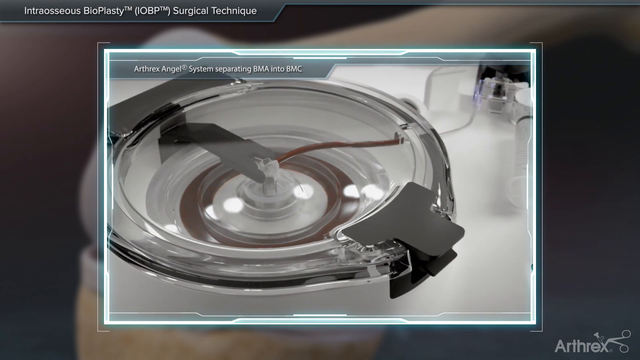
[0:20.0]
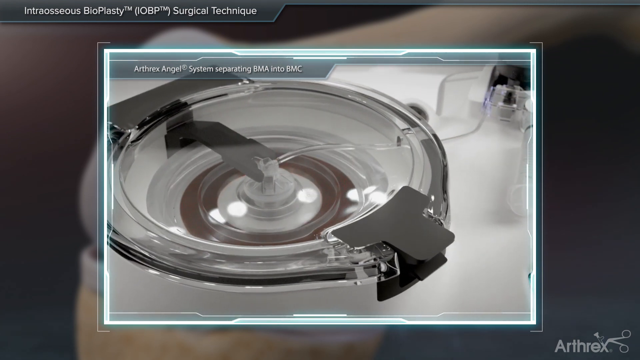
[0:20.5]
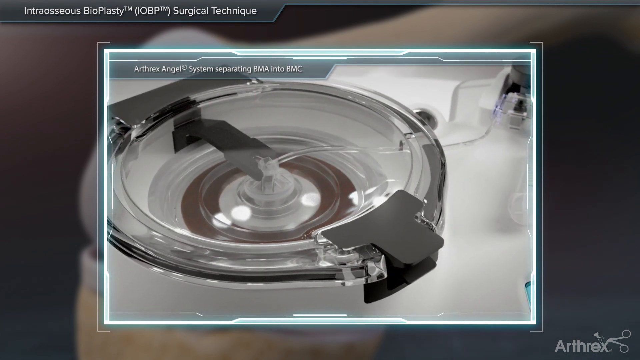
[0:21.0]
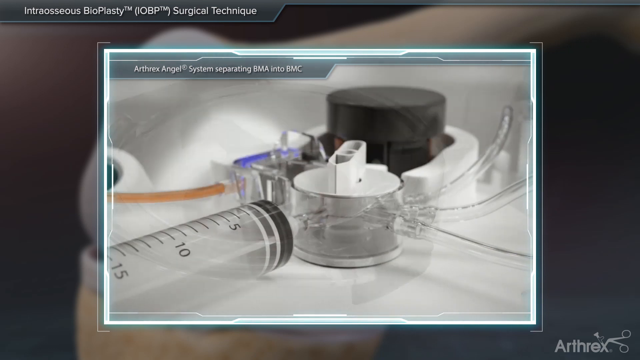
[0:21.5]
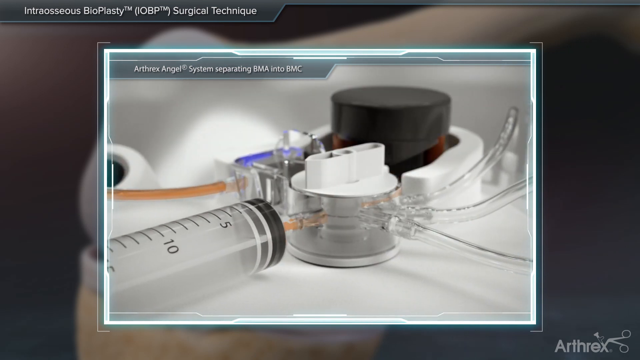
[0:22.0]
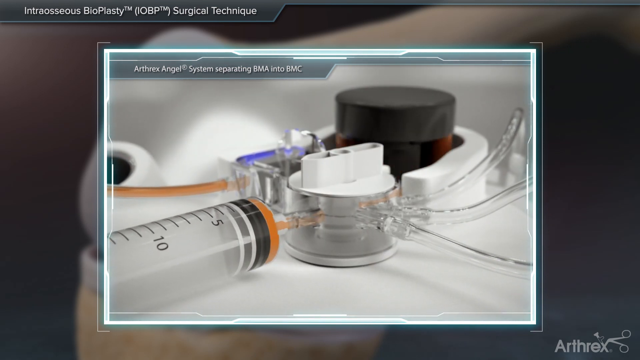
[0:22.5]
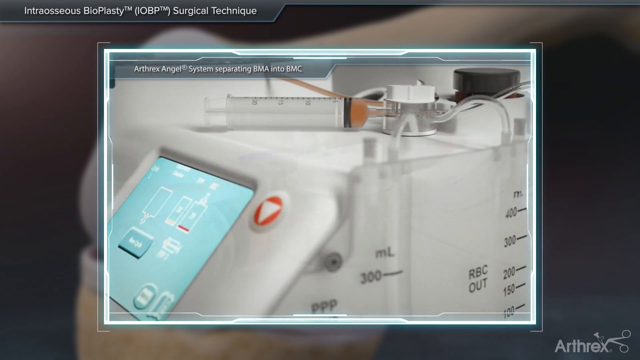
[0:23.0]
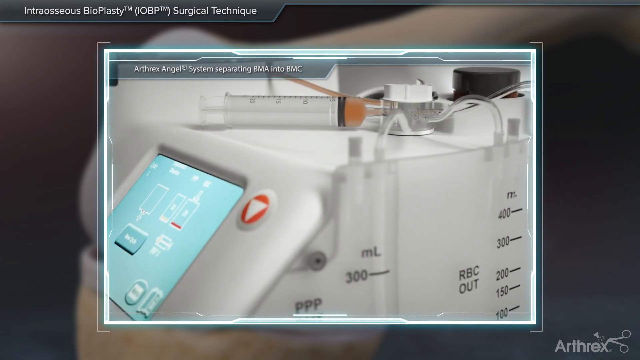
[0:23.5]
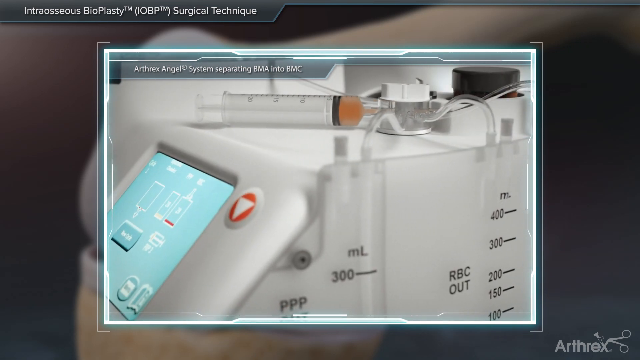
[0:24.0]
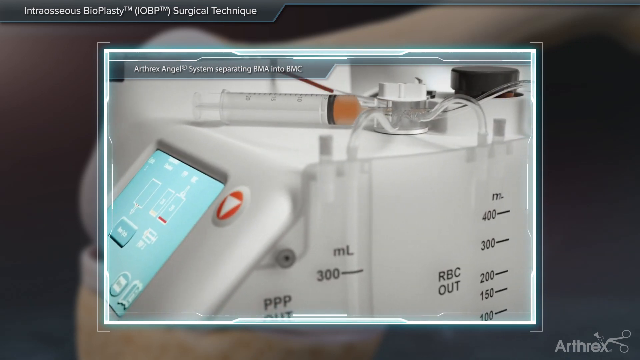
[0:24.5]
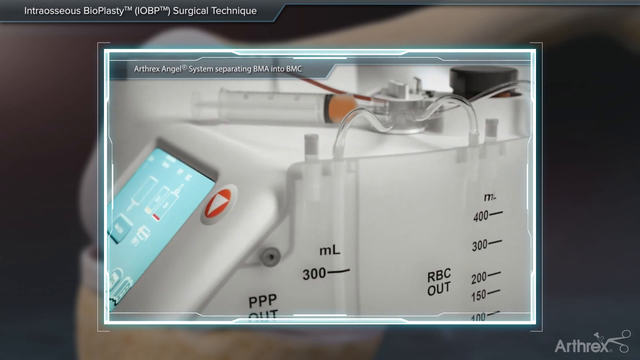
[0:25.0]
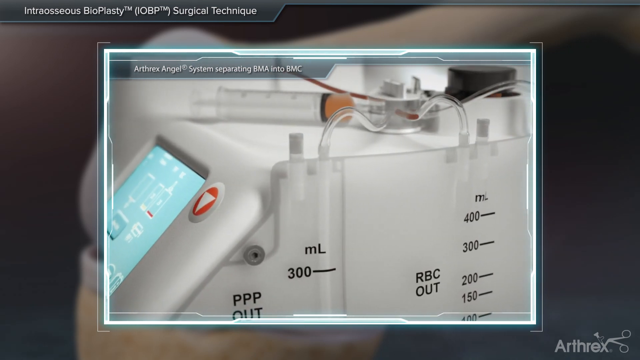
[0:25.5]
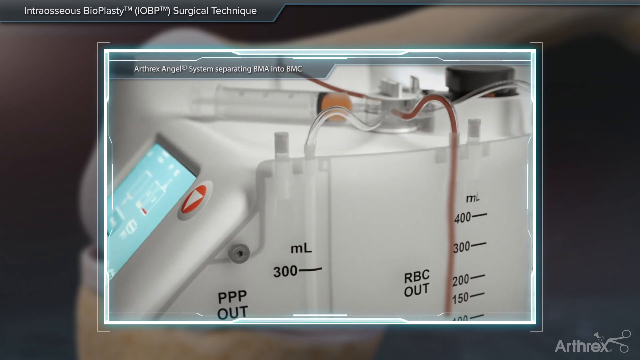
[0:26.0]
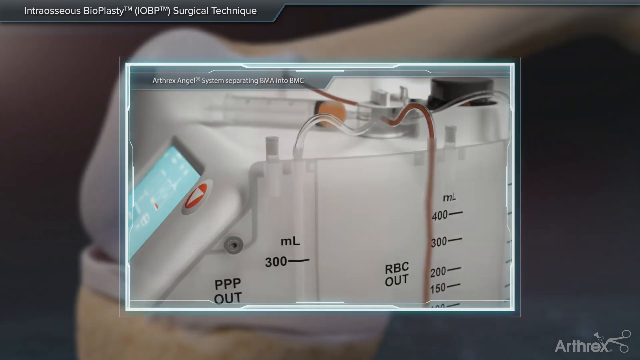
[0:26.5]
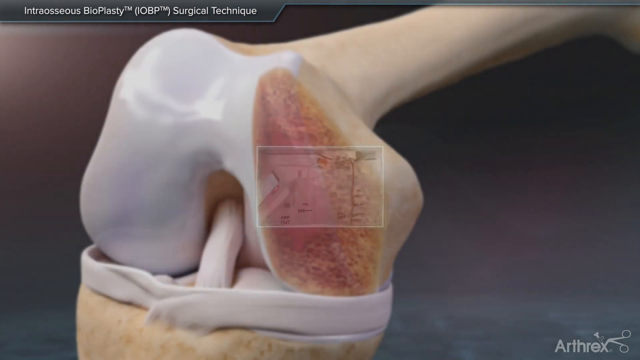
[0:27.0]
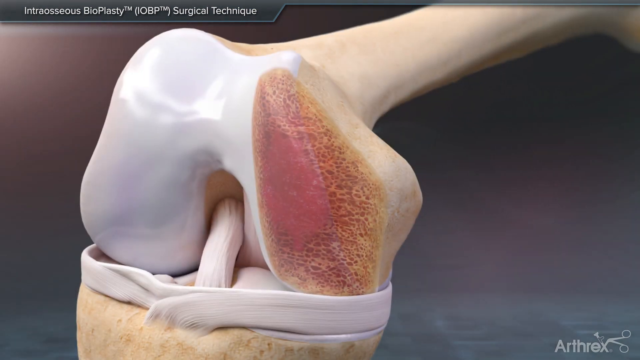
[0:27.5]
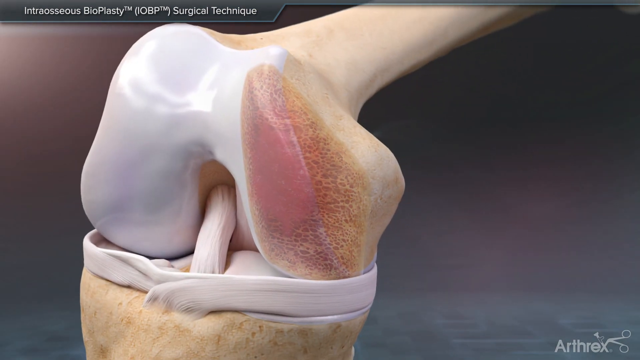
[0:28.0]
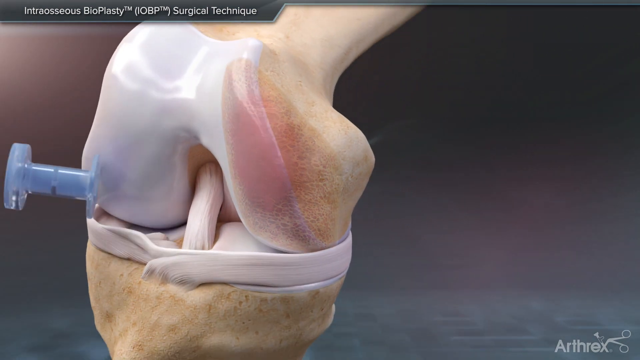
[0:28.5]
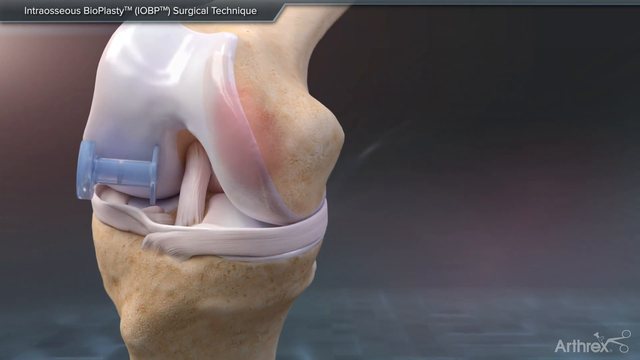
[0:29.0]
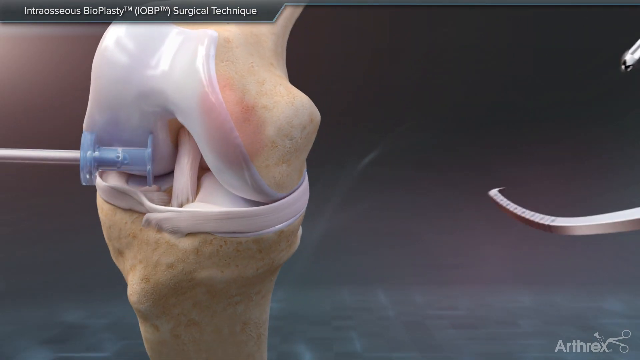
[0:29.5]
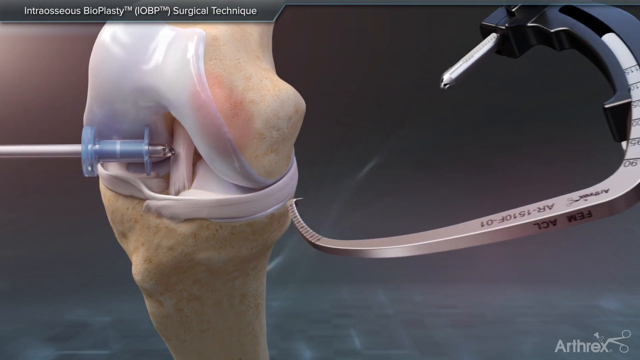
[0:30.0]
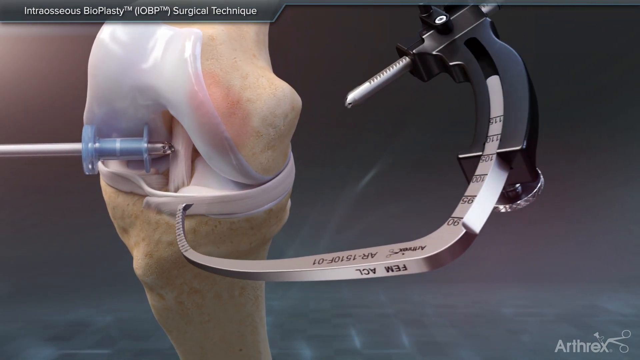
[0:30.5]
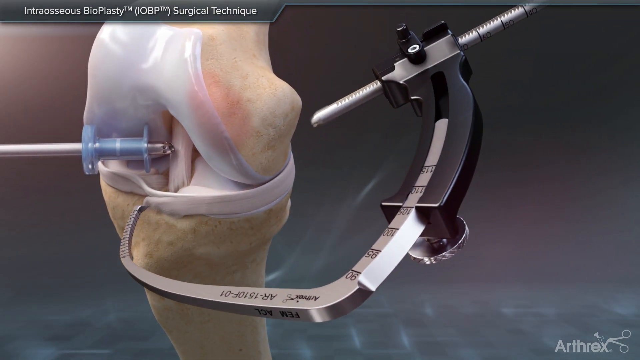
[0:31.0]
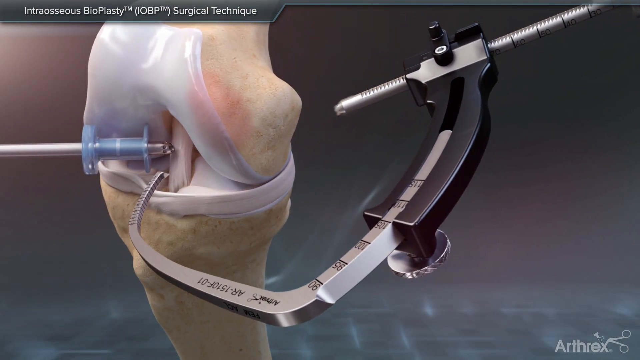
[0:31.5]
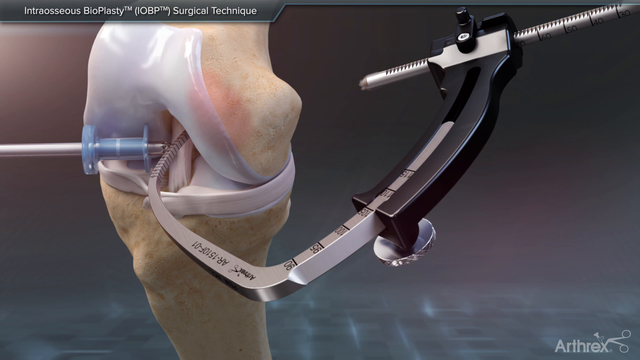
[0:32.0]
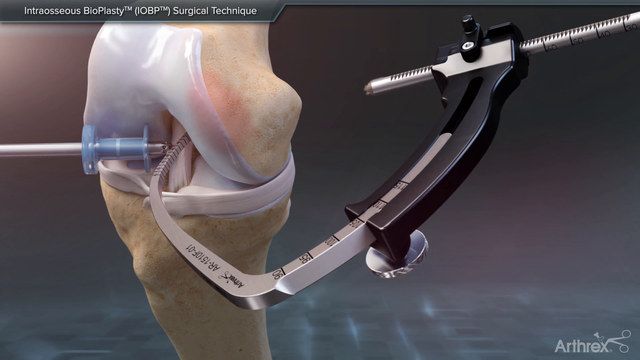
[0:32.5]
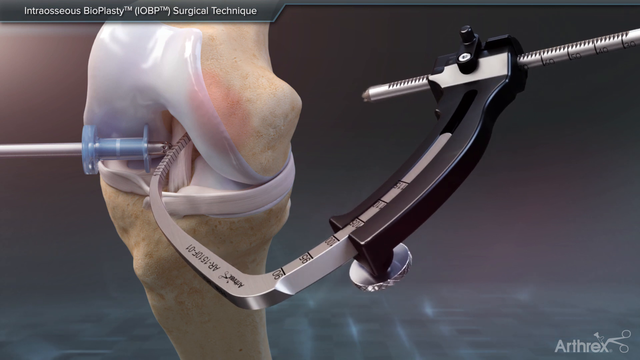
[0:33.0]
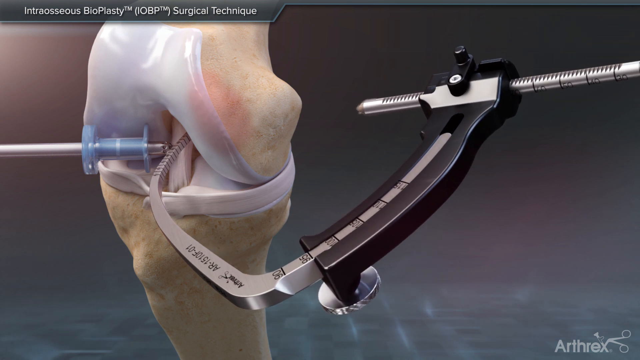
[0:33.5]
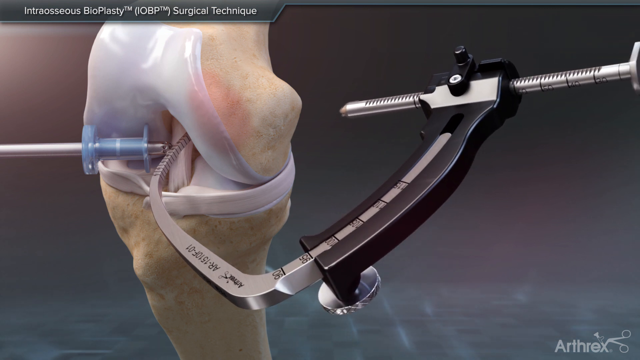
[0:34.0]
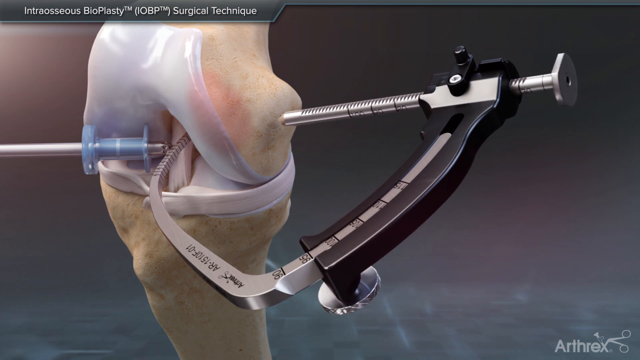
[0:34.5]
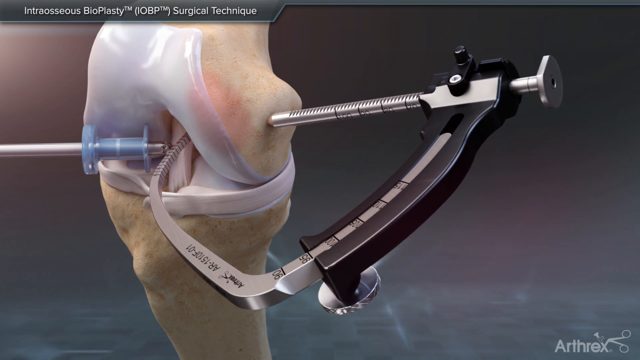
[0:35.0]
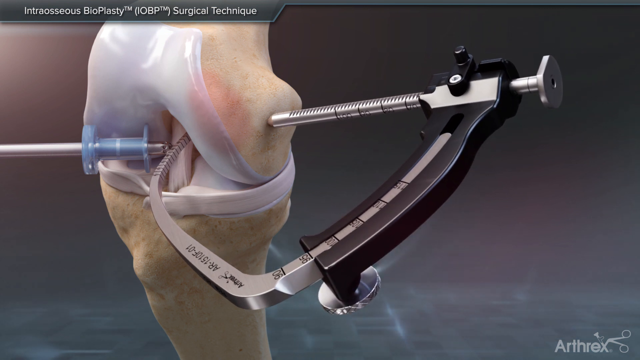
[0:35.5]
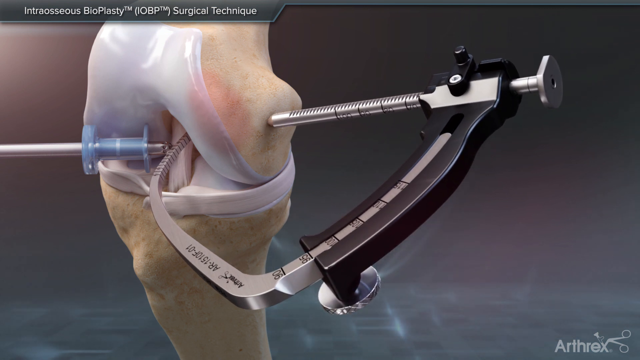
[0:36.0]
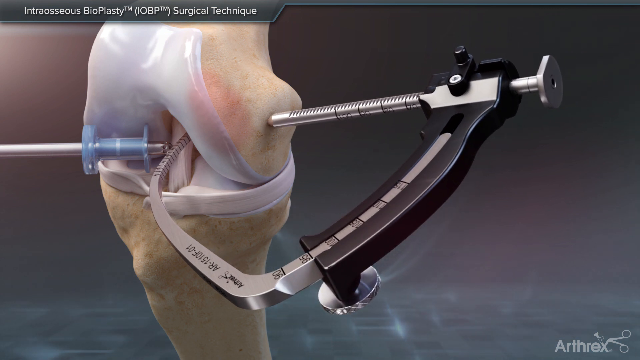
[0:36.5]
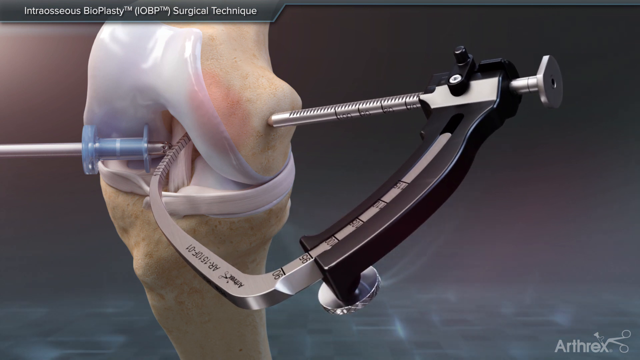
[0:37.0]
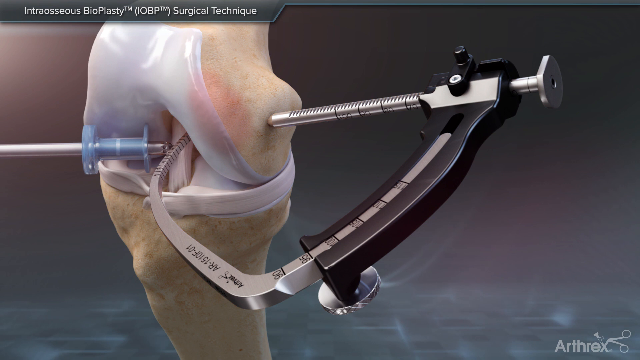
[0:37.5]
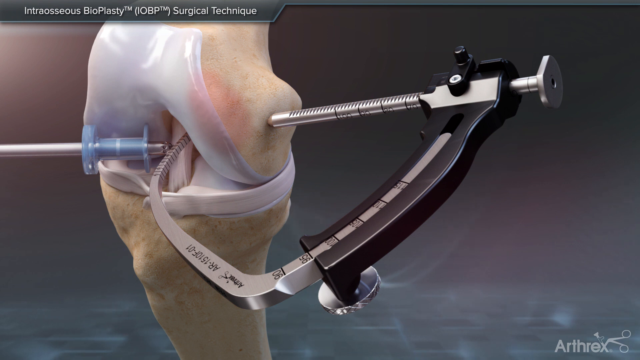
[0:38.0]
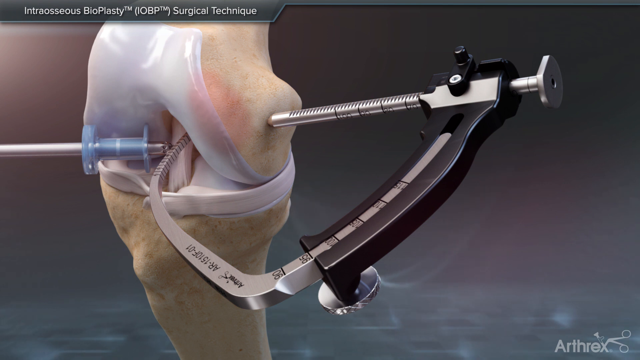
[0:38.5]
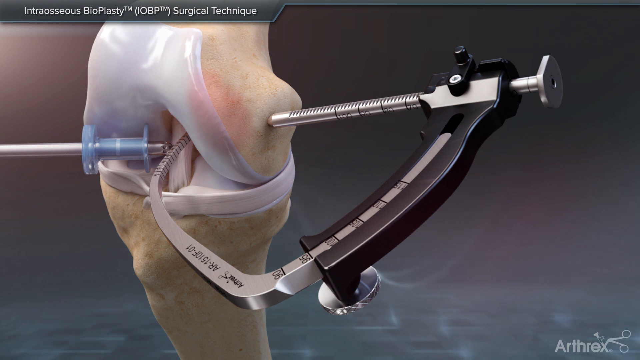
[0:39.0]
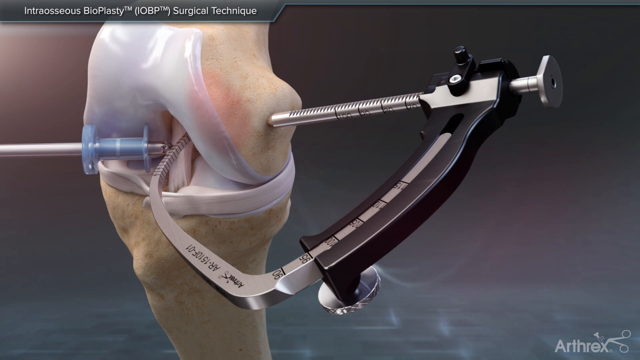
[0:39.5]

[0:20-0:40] Text on screen reads "Anthrex angel system separating BMA into DMC device." The device pulls in the blood from the secondary device, where the blood spins around, apparently separating some of its components. A more detailed view shows the initial device with its white cylinder, into which a syringe depresses some orange liquid. The other device looks black or has a black cap, and there appear to be individual smaller capsule-sized tubes inside it as it spins. The medical device has a computer screen with a red power button bearing a white triangle, apparently a touch screen used to control its features. There are measurements in millimeters on the side. The model shows the system working in real time, with a close-up of the blood being separated. The inset of the device then disappears, and the close-up of the leg joint returns. A medical device that looks like a spool goes into the joint, and tubing with a metal tip goes into it. Another metal device with measurements on it comes to hold the joint together; it looks similar to something tightened with a dial to hold two separate items together.